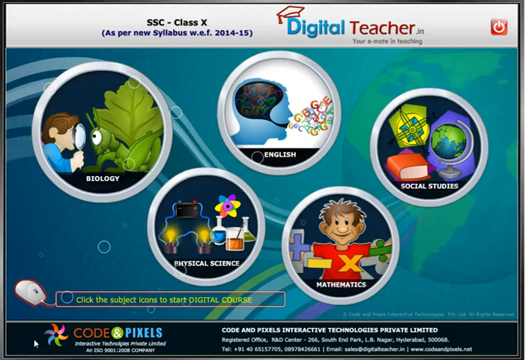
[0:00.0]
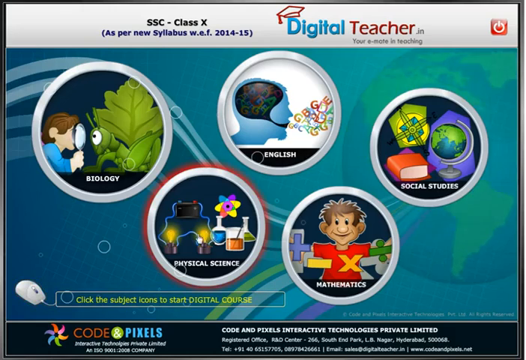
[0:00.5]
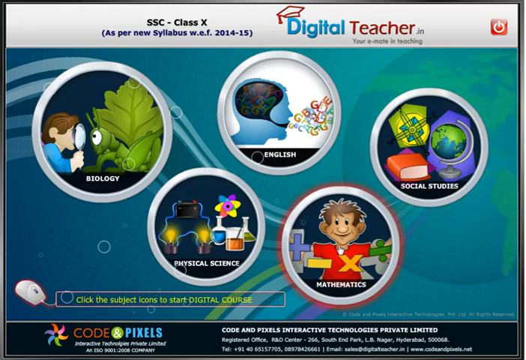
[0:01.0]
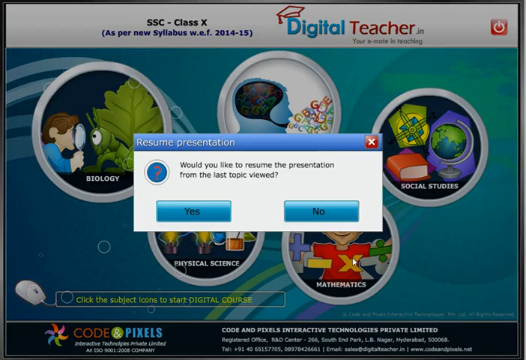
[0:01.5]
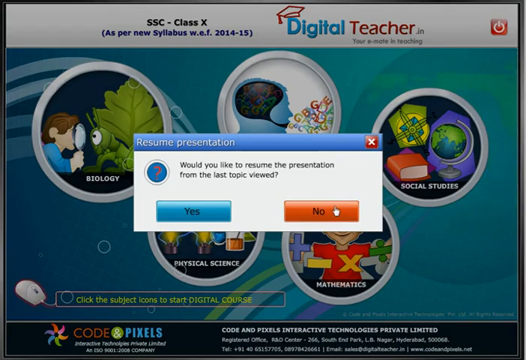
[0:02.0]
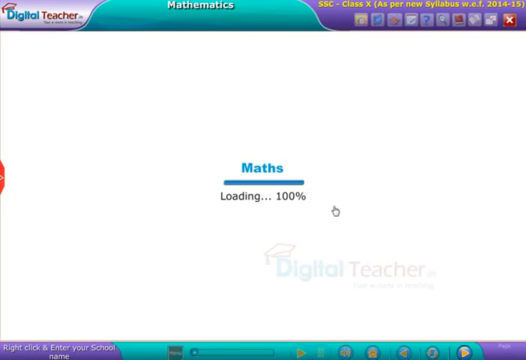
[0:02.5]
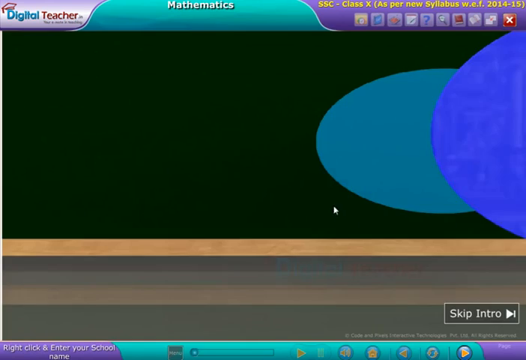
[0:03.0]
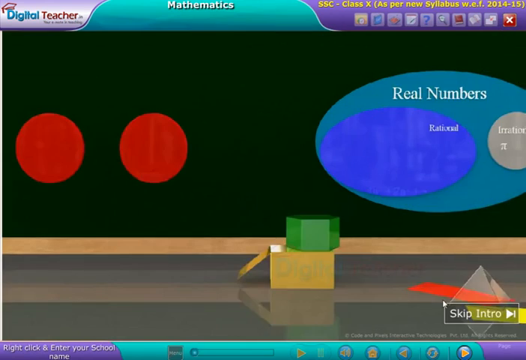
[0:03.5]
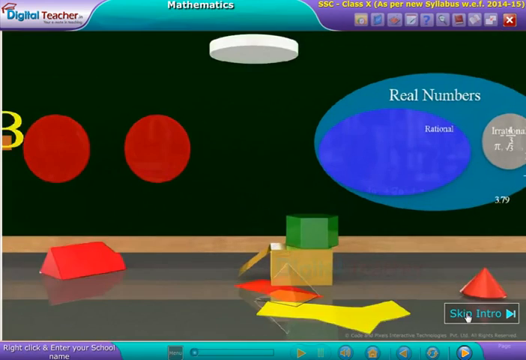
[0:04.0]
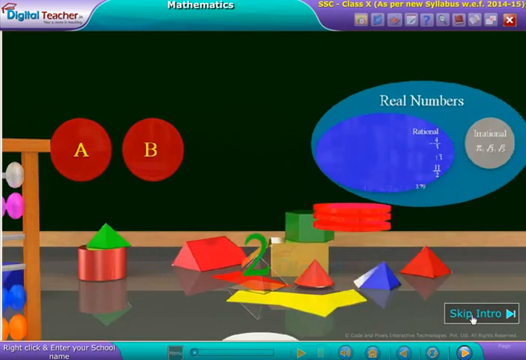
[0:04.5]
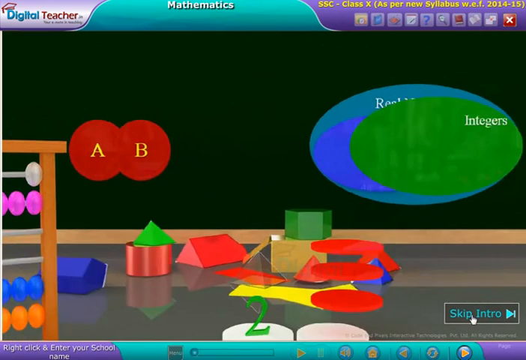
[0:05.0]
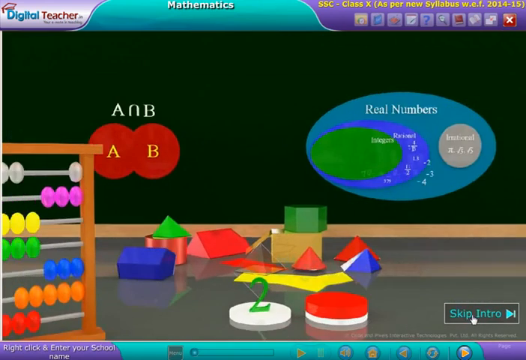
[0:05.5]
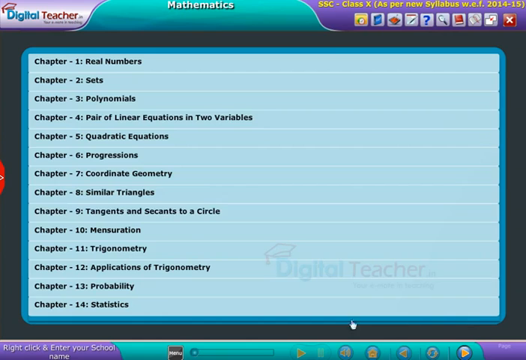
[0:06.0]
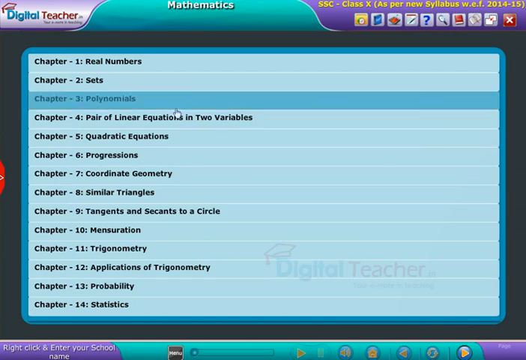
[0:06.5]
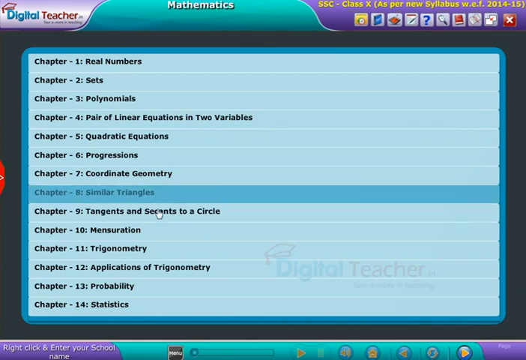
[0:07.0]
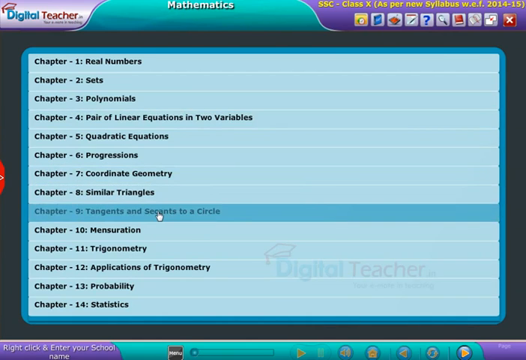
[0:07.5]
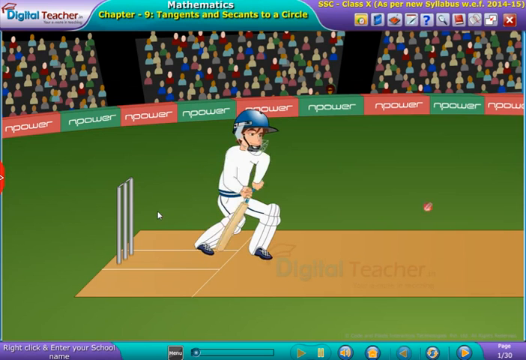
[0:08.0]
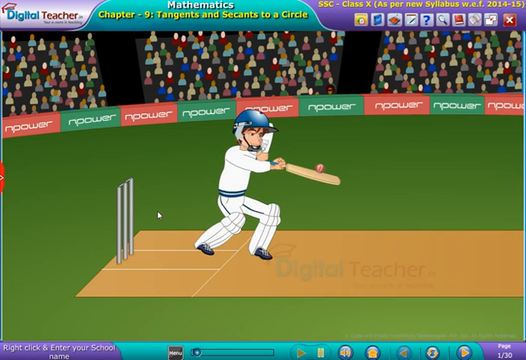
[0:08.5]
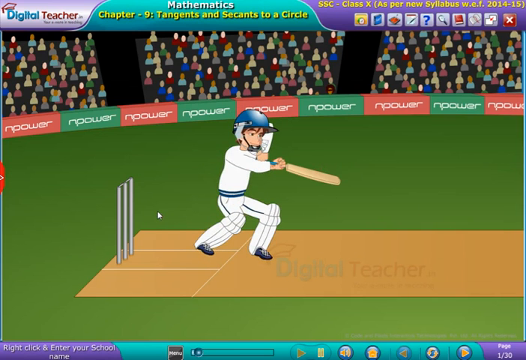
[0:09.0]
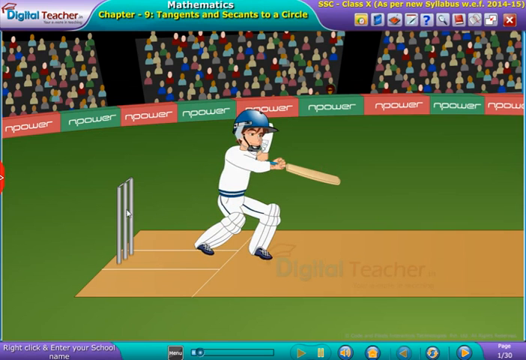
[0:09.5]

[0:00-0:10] A website called digital teacher appears, and it looks like it is being used for some sort of recording, apparently of just the intro. The home screen lists several subjects: mathematics, social studies, english, physical science, and biology. Mathematics is clicked, and a notification comes up reading "would you like to resume the presentation from the last topic view"; no is clicked. An intro animation plays, apparently about mathematics. Then "skip intro" is clicked, revealing a list of chapters, and chapter 9 of the 14 chapters is selected.